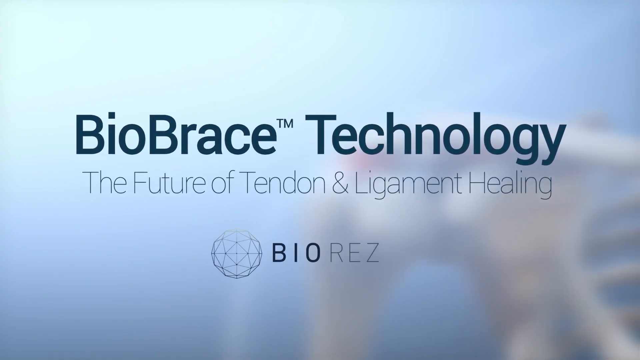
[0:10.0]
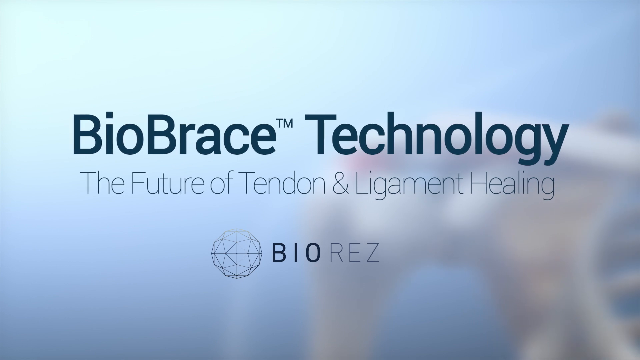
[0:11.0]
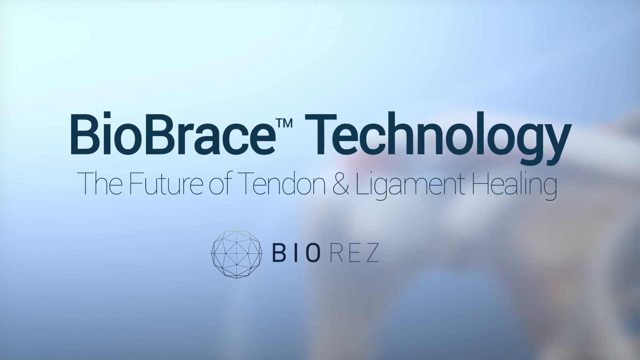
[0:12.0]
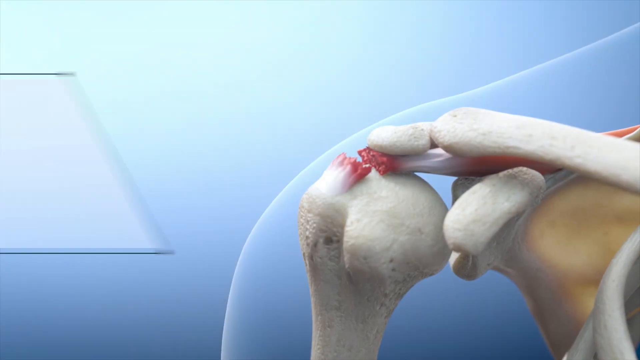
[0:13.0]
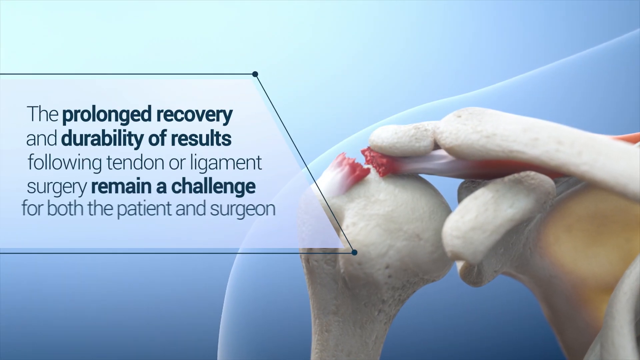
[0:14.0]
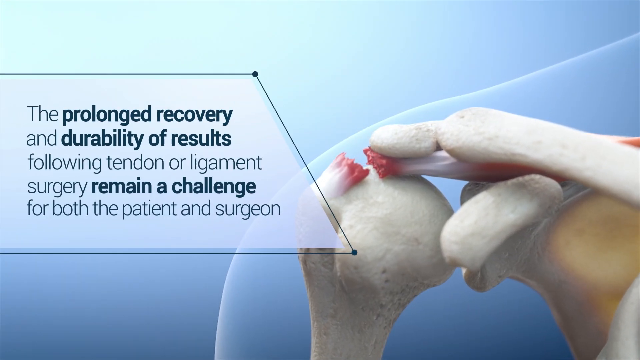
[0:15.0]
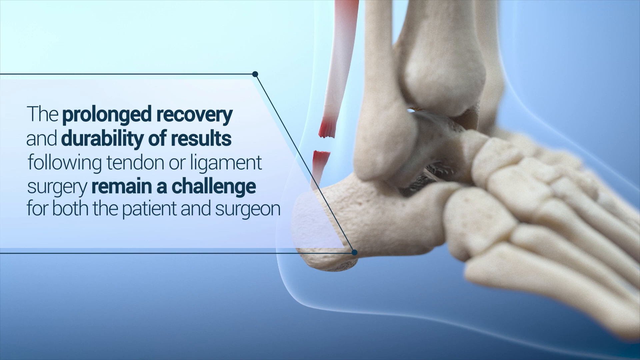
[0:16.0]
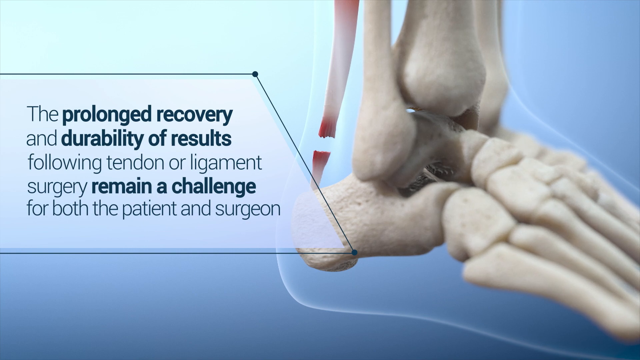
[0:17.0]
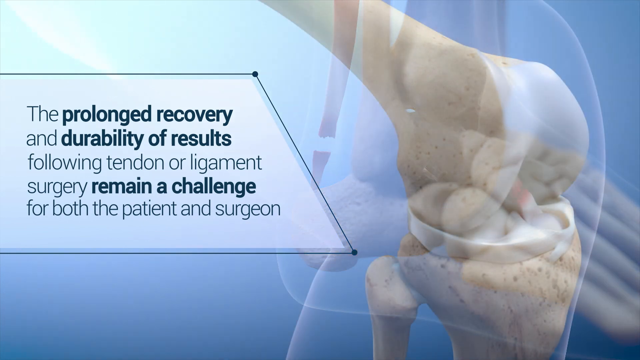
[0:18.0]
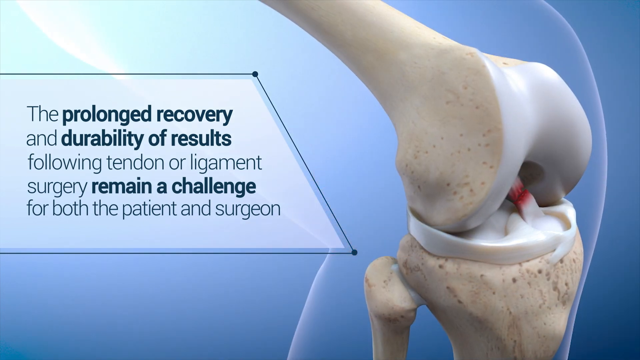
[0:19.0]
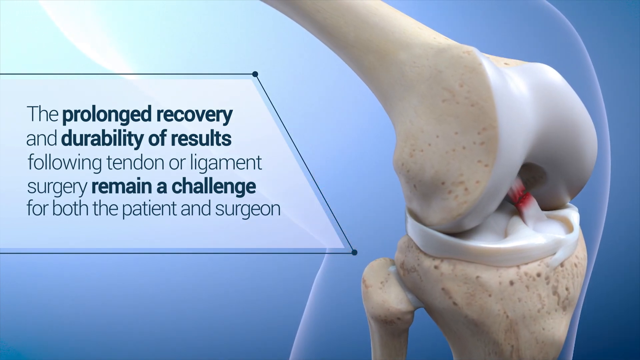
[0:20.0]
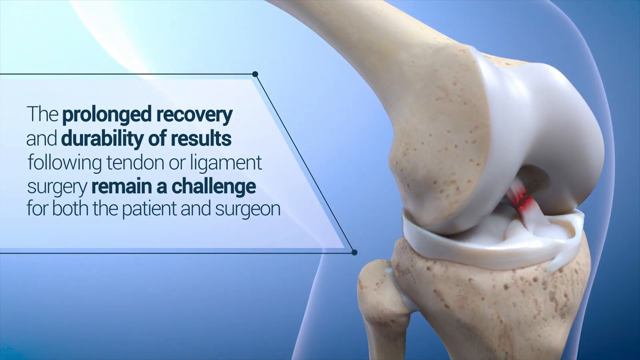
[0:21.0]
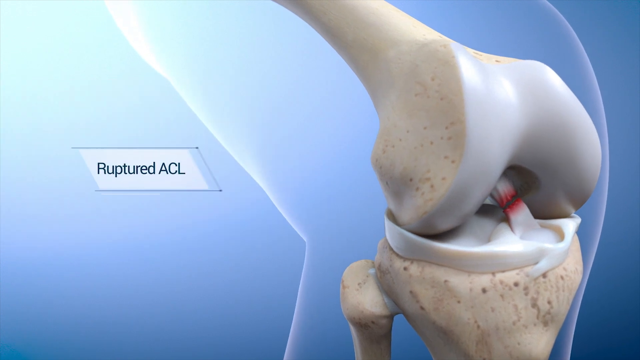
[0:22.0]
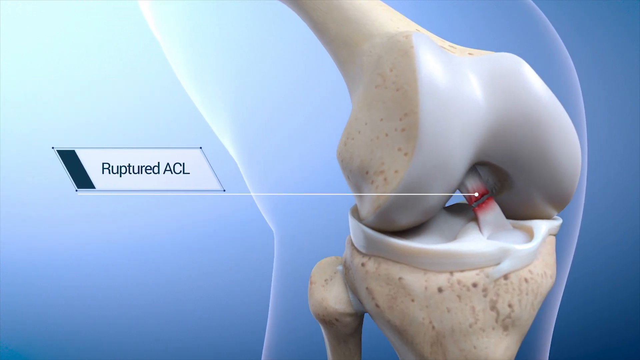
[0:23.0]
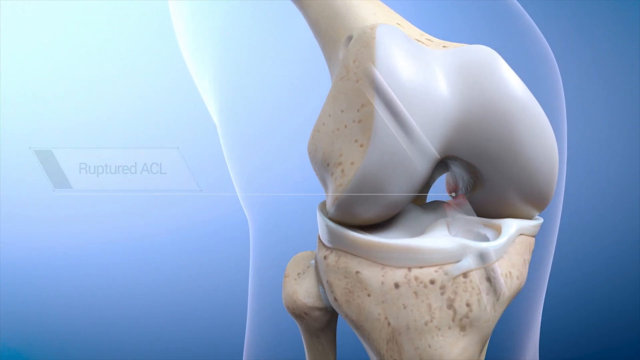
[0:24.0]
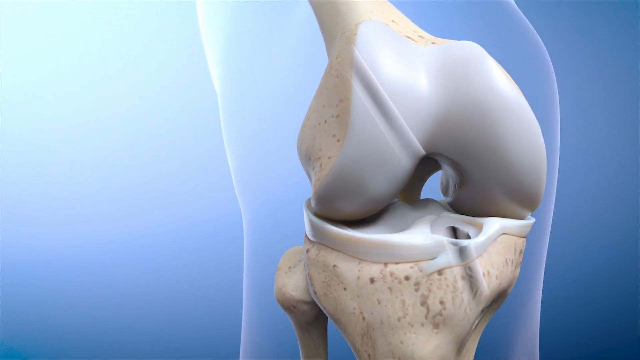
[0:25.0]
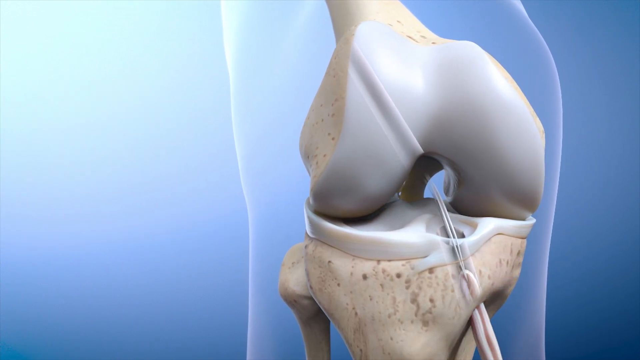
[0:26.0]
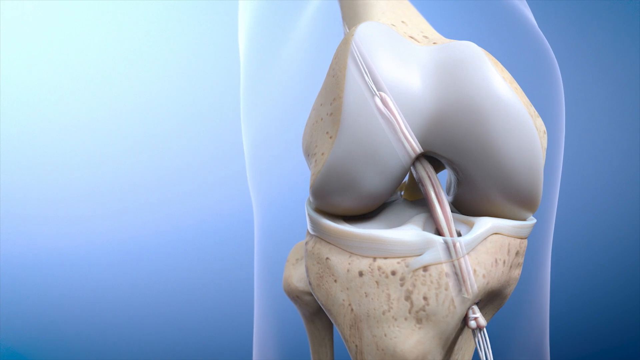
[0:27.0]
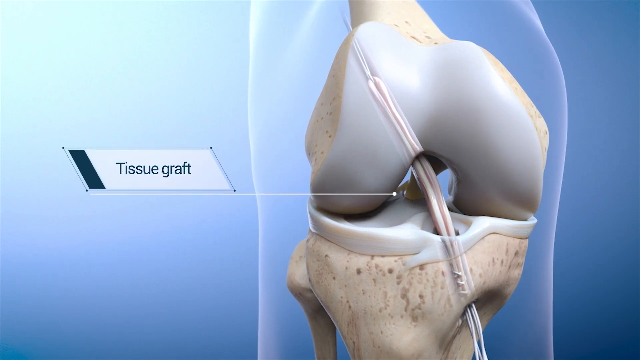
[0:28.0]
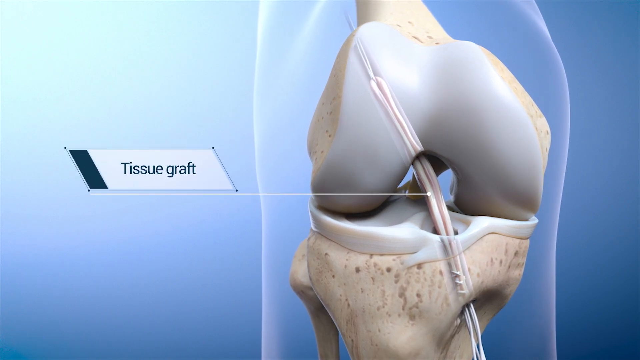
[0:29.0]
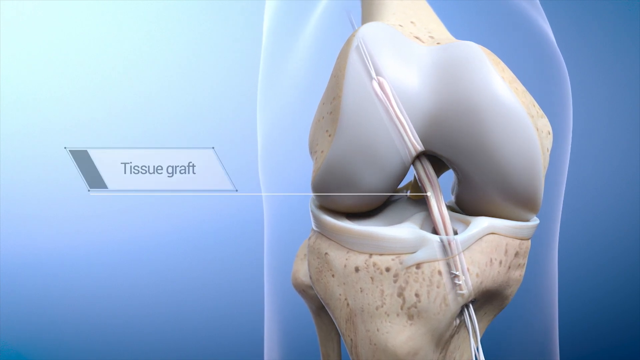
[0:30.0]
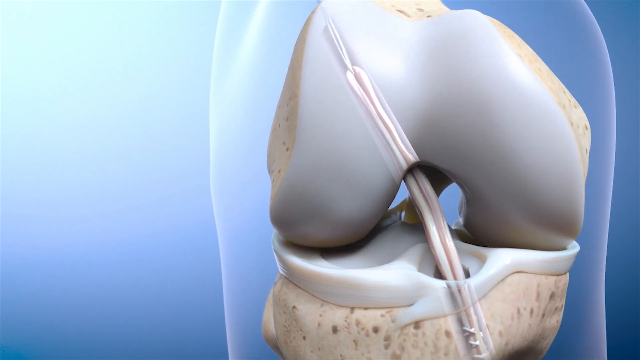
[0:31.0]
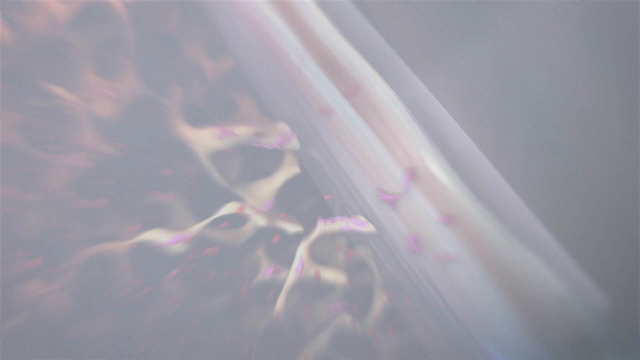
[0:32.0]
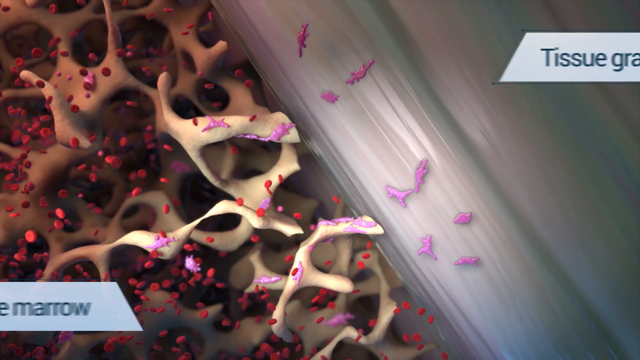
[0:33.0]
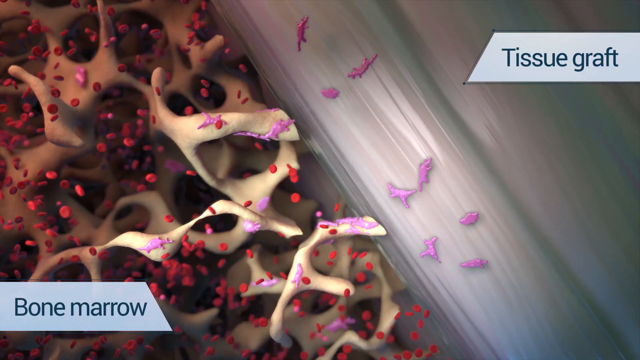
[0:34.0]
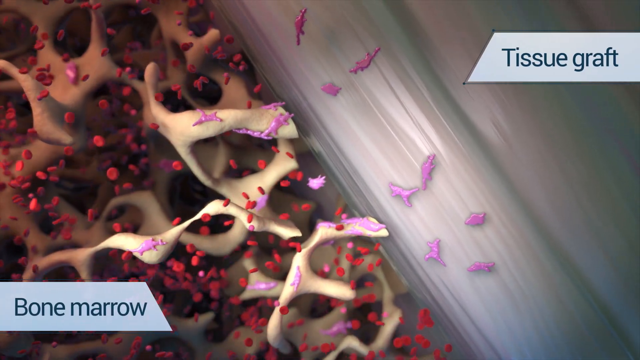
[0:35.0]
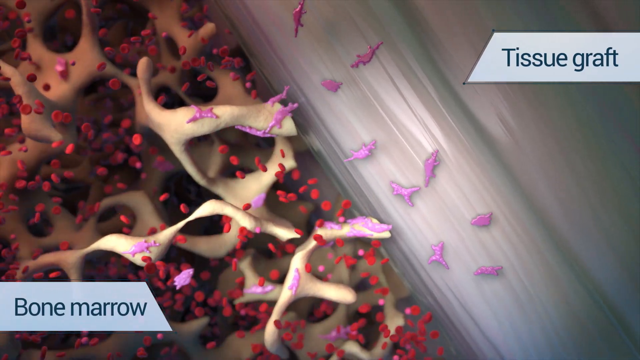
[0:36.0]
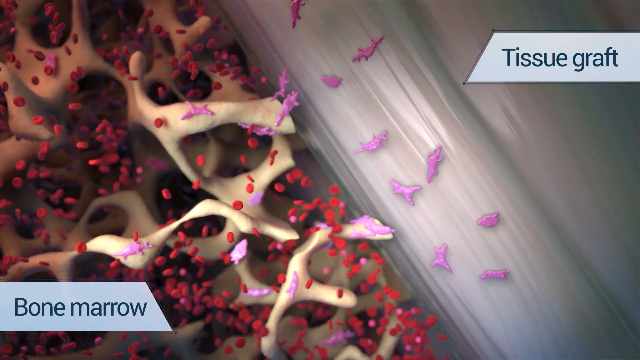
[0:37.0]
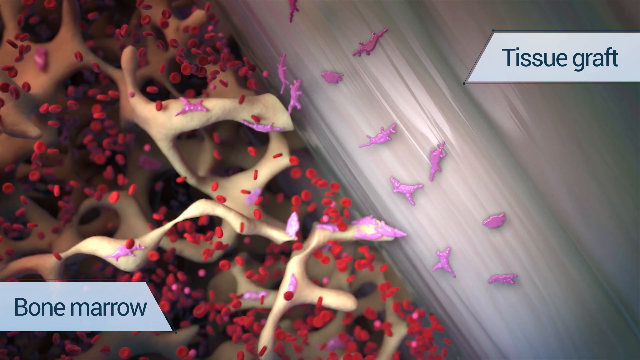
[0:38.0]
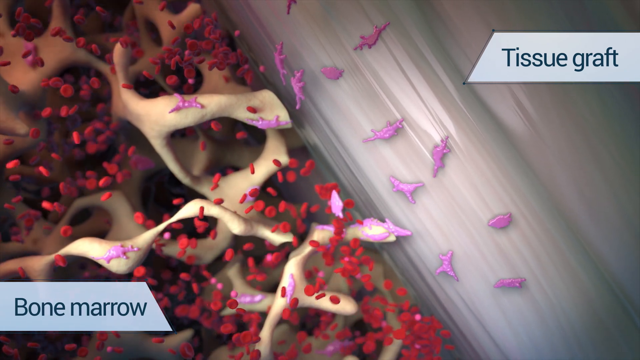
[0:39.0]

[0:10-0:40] The same BioBrace technology screen is shown, now on a blue background that is not solid; there are some colors in the lower right, and it looks like an out-of-focus photograph. The words then go away, and the photograph comes into focus in the bottom right corner of the screen; it looks like a photograph of bones. A box slides in from the left reading "the prolonged recovery and durability of results following tendon or ligament surgery remain a challenge for both the patient and surgeon", with "prolonged recovery", "durability of results" and "remain a challenge" in bold. The box has a translucent white background and is not a square: it is open on the left, has a border on the top and bottom, and its right border is slanted. Another picture of bones comes in, taking up the whole right side of the screen, and then it switches to a different picture of bones. This photograph rotates from the right to the middle of the screen, with a caption reading "ruptured ACL". Something then comes up from the bottom, and a caption on the left reads "tissue graft". There is a close-up as the view zooms in, with a caption on the right reading "tissue graft", and an animation of little purple and red things.